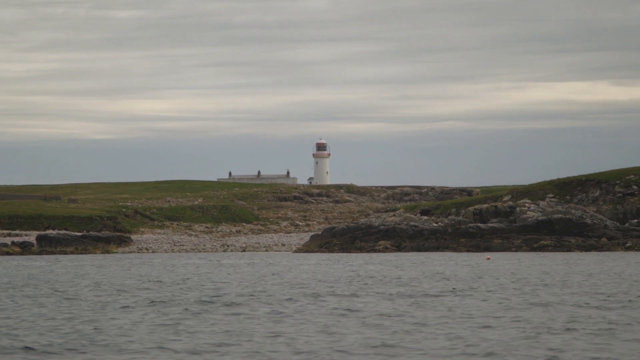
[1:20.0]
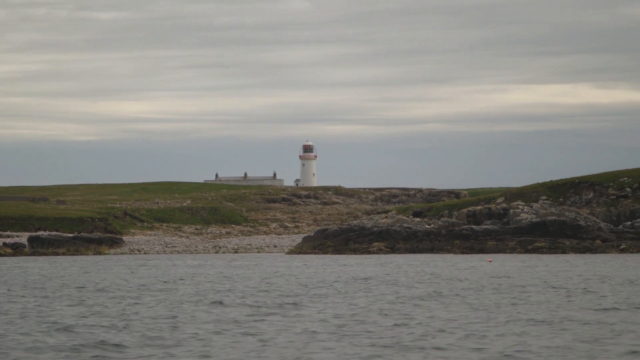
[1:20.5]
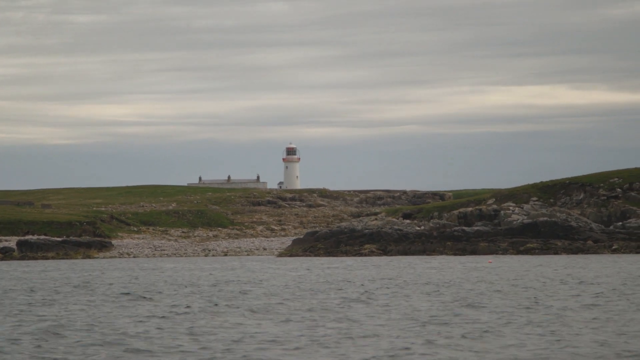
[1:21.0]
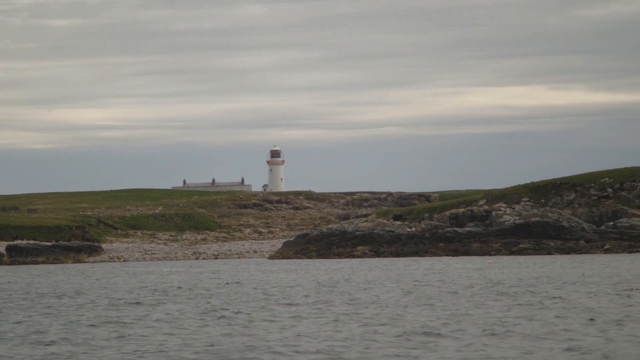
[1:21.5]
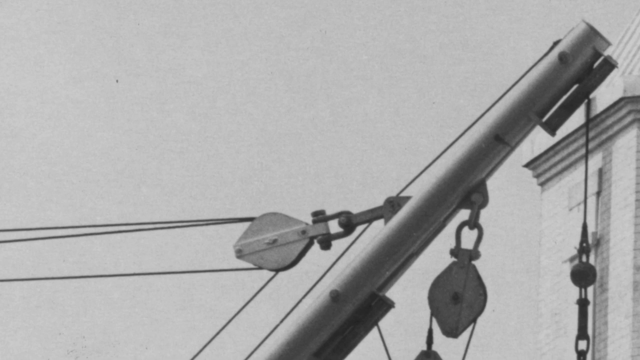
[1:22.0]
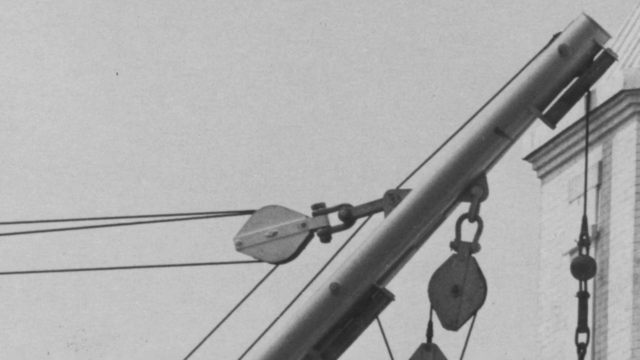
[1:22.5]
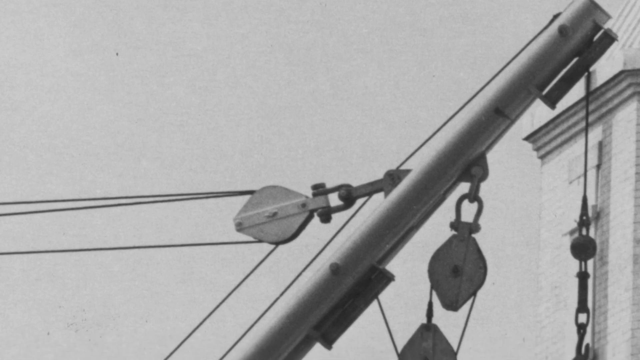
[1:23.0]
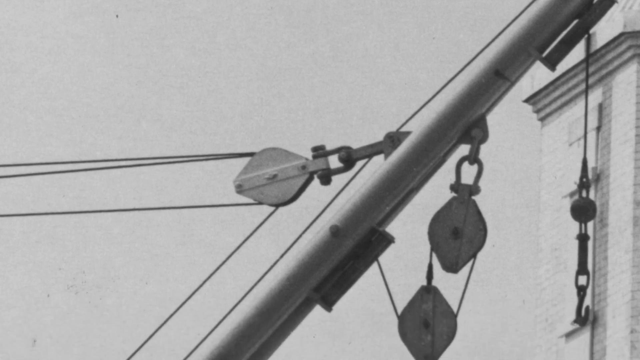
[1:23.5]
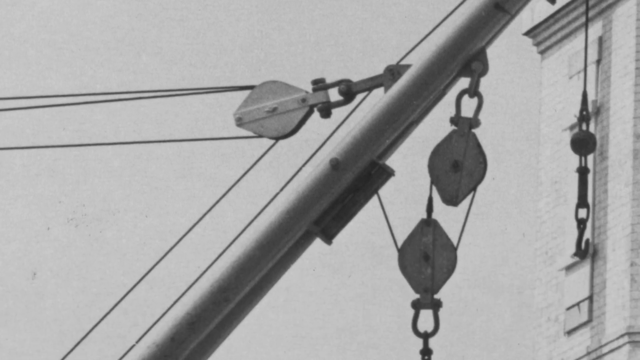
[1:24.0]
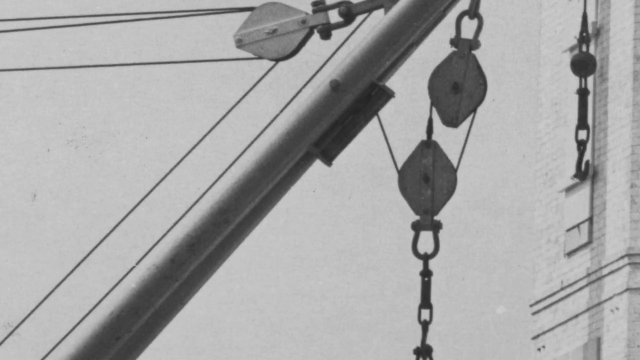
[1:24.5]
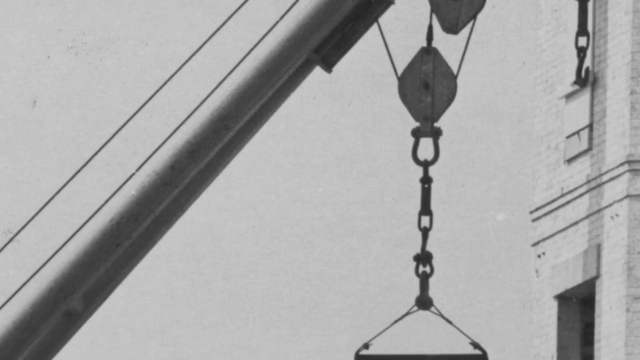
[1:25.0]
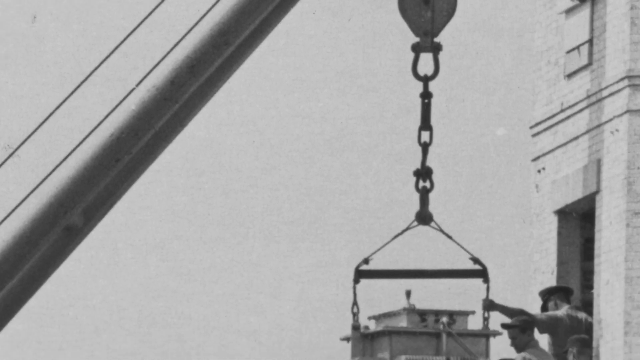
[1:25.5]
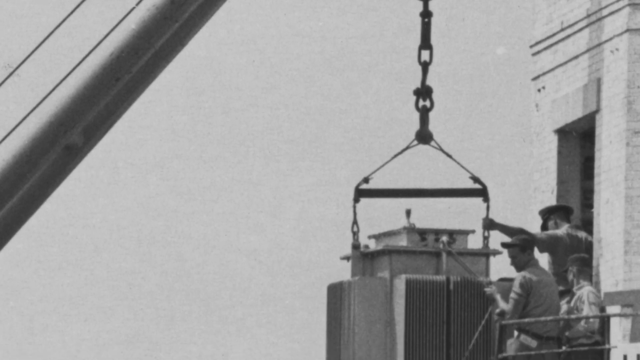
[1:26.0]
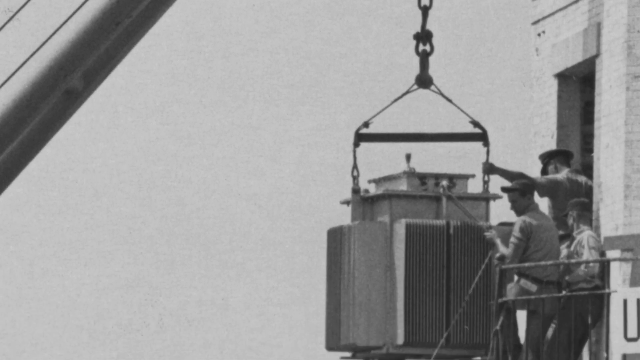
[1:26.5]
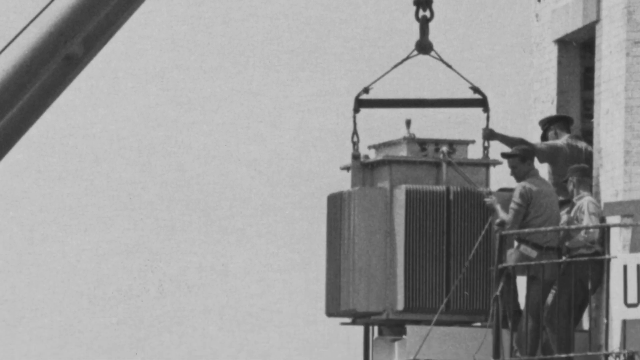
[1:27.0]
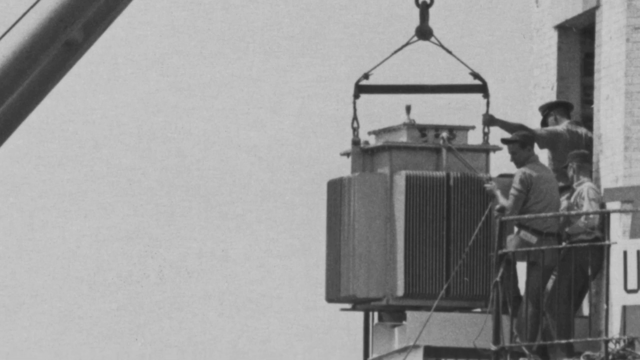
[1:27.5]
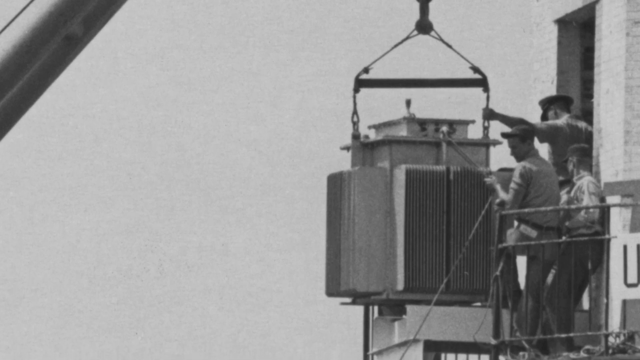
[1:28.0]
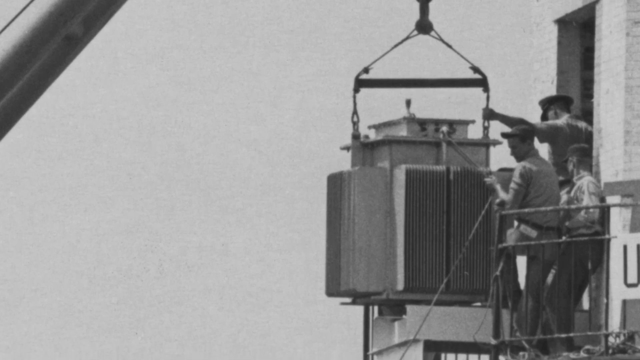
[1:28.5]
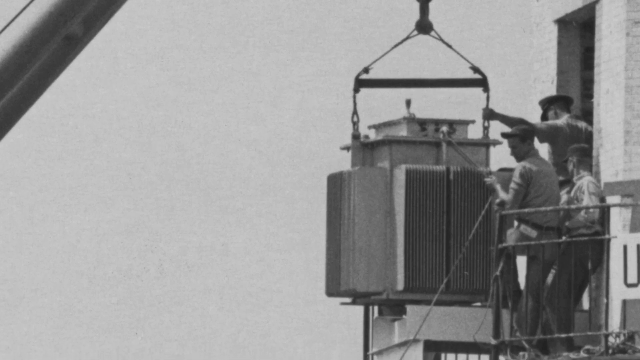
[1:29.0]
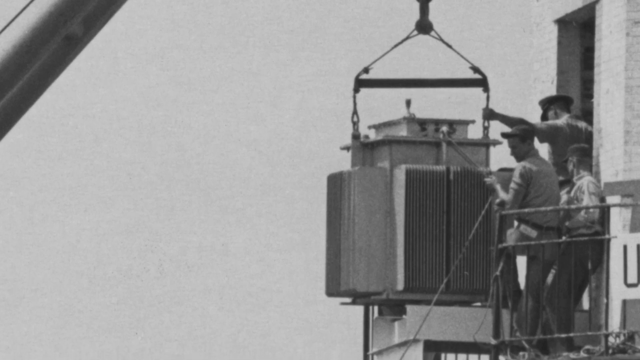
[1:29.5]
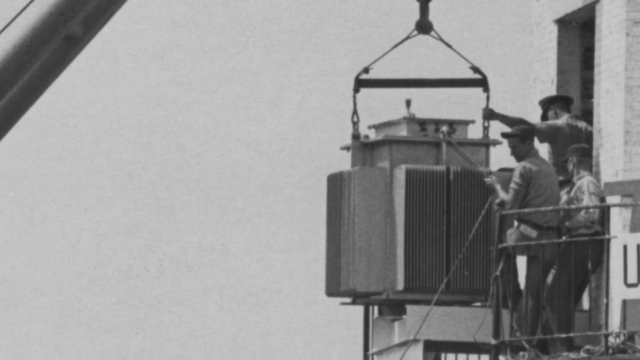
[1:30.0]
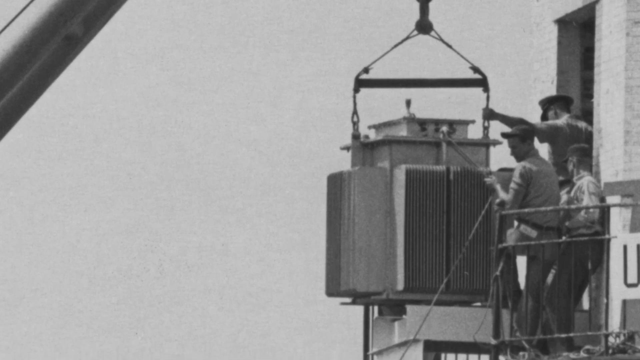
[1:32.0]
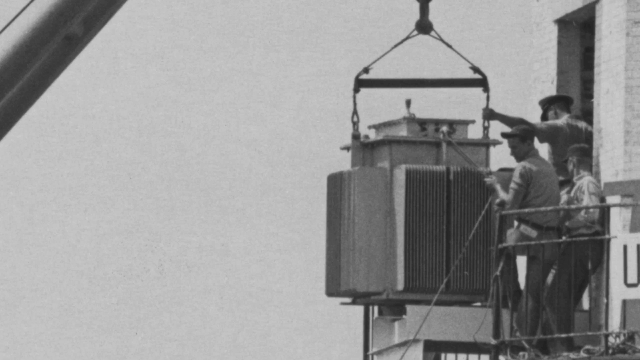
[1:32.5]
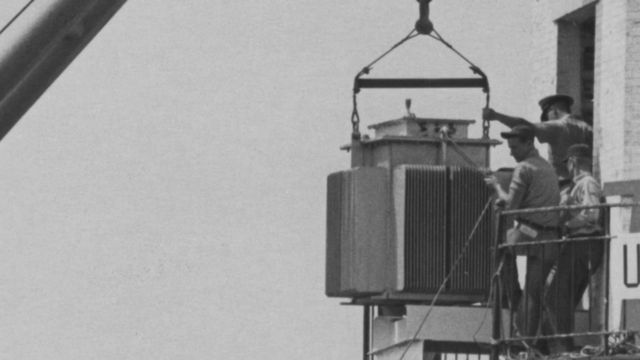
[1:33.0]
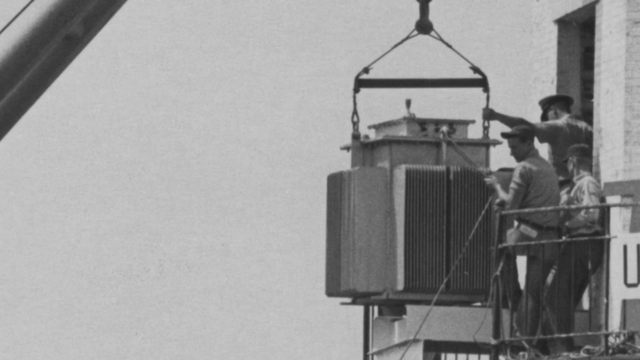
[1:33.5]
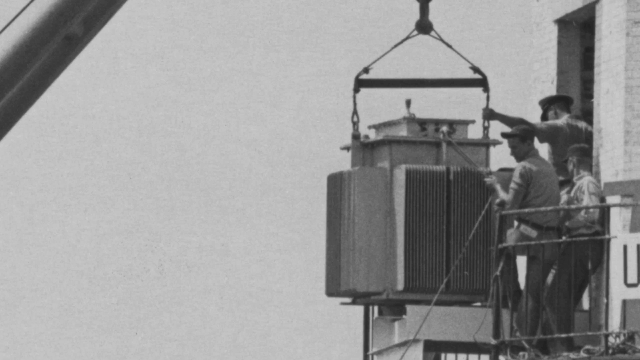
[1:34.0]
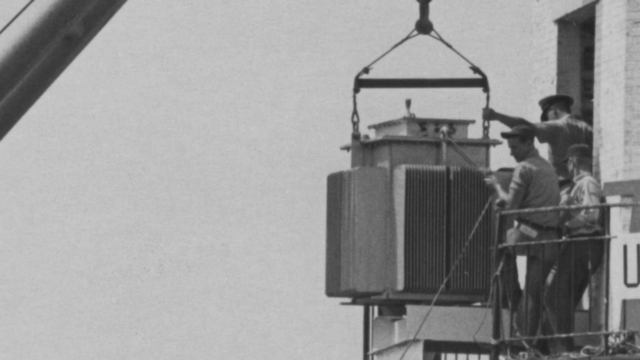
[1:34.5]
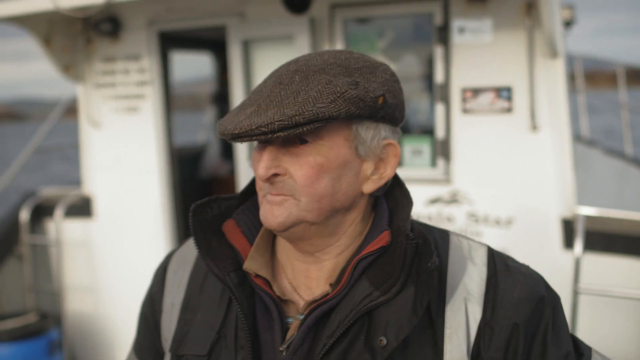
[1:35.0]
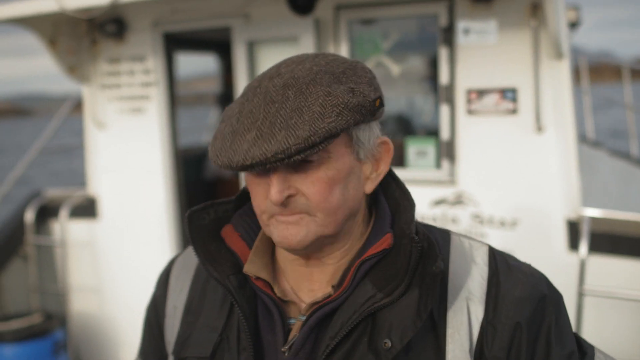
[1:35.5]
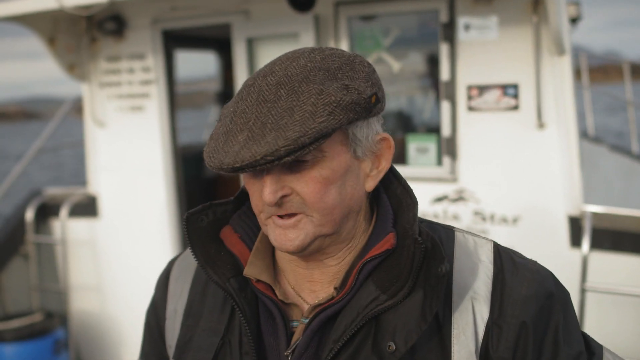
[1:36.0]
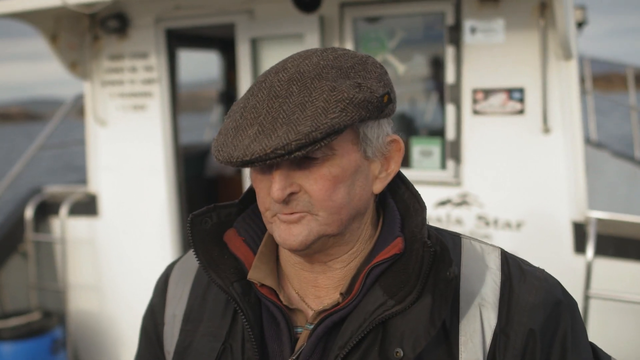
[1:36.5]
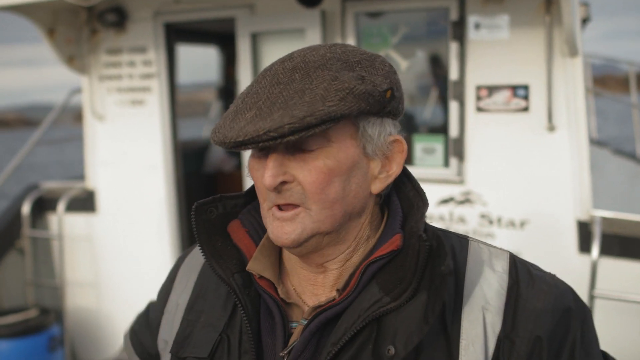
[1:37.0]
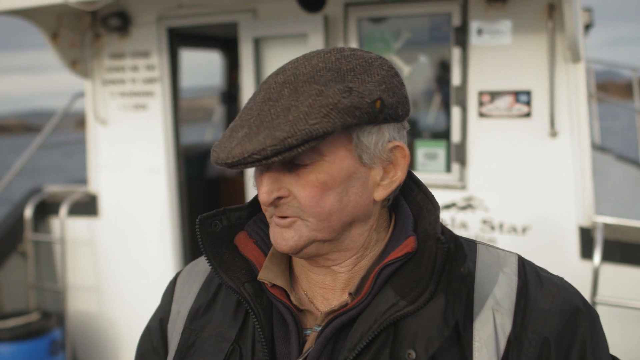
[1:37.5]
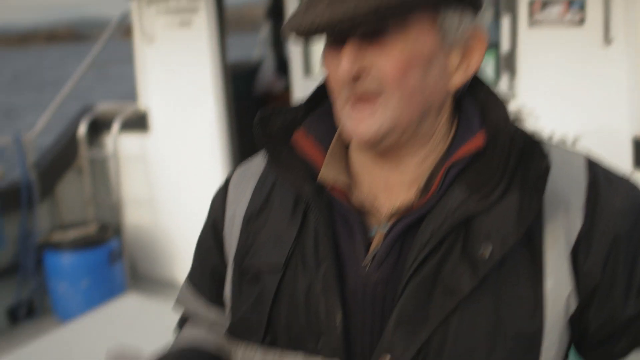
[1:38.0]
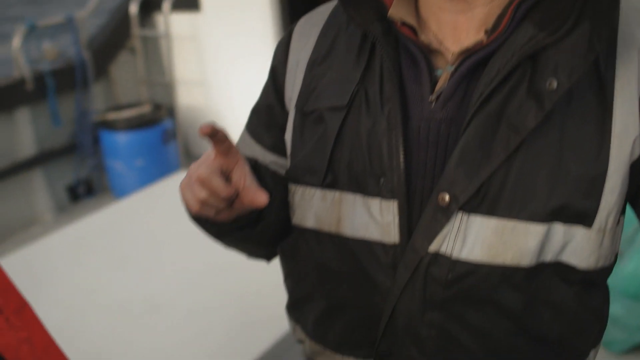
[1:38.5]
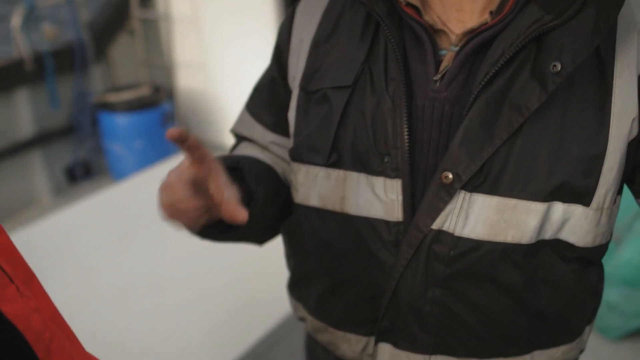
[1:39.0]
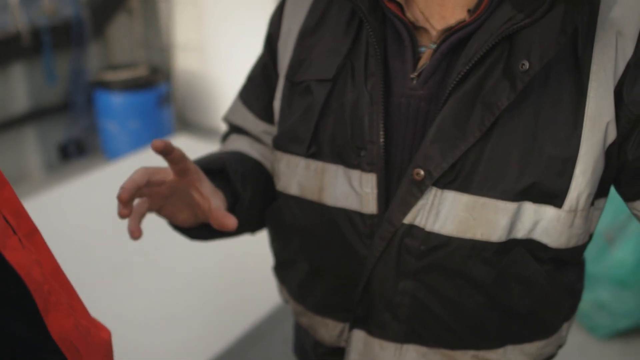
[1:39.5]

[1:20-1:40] A shot of the lighthouse continues as the ship passes by on the sea. The rigging and mooring of the ship are shown, with lines running all over the place. A black-and-white photograph that looks like it is from the past follows, in which a crane appears to be lifting something; it possibly shows the building of the lighthouse, in what looks like the 20s or 30s.